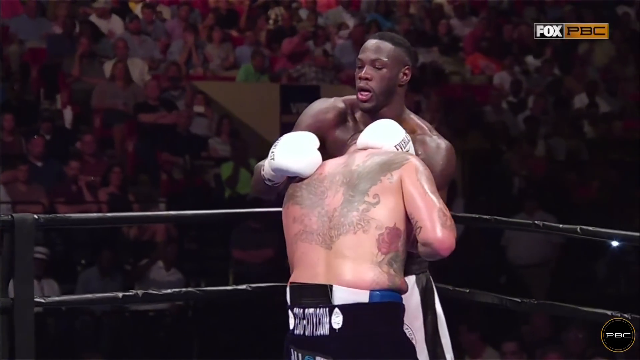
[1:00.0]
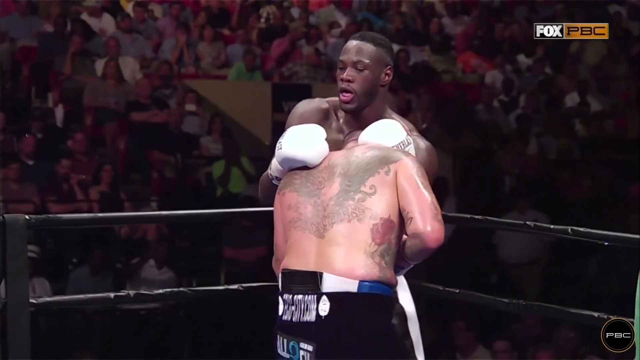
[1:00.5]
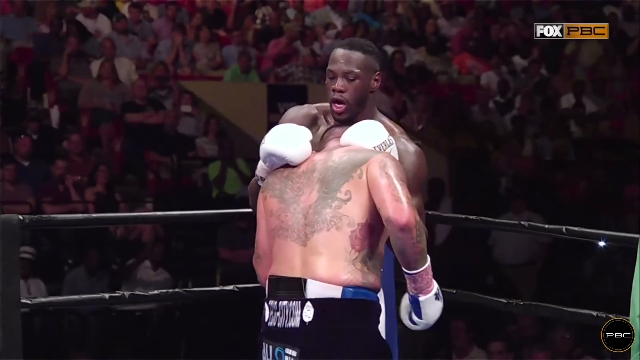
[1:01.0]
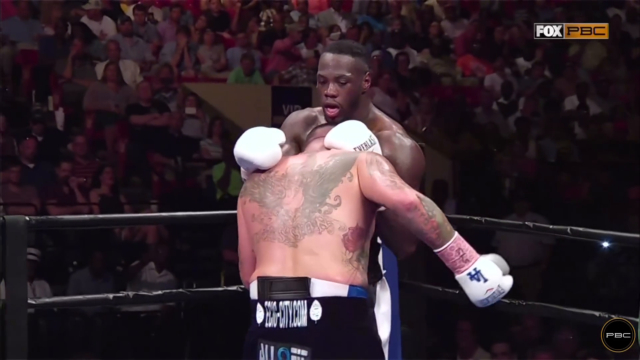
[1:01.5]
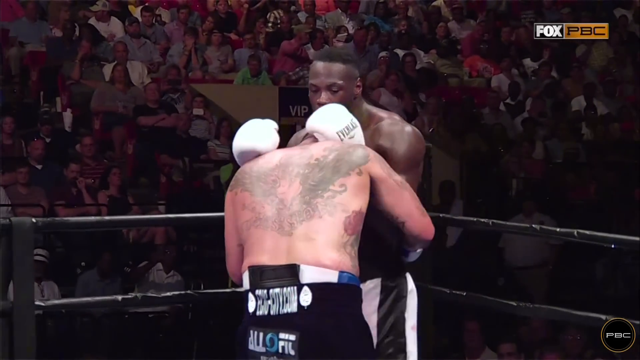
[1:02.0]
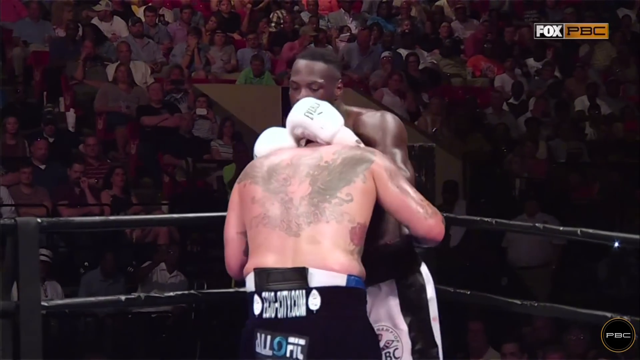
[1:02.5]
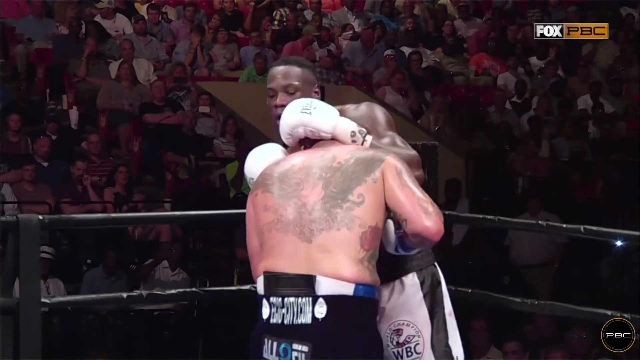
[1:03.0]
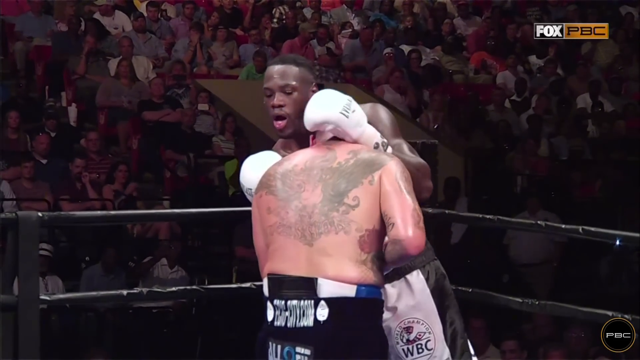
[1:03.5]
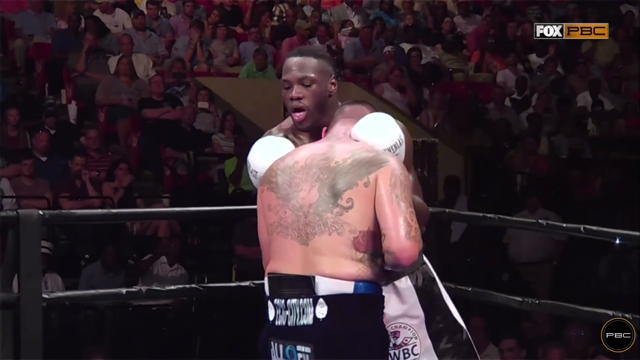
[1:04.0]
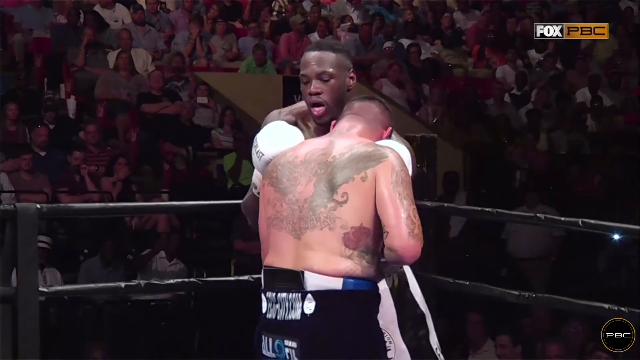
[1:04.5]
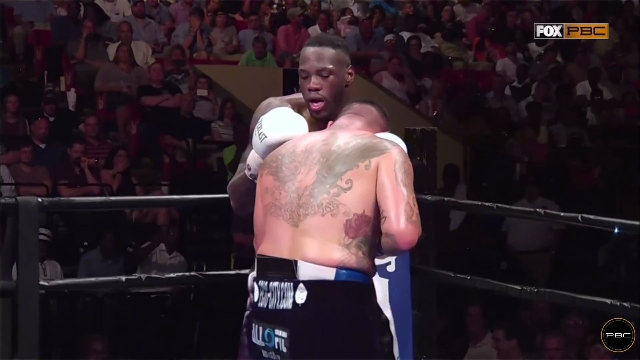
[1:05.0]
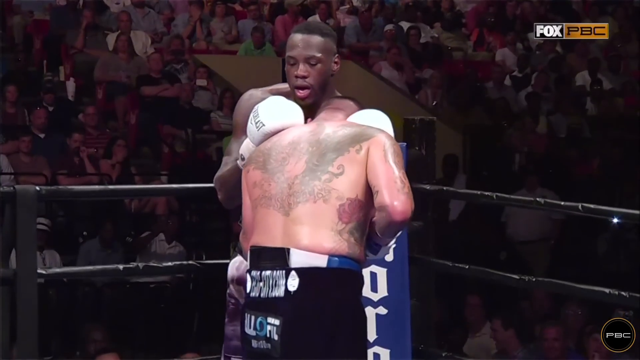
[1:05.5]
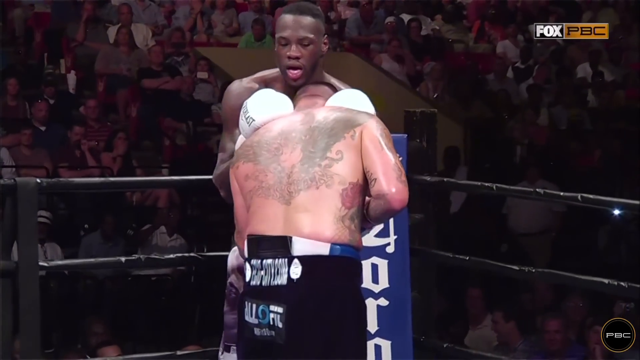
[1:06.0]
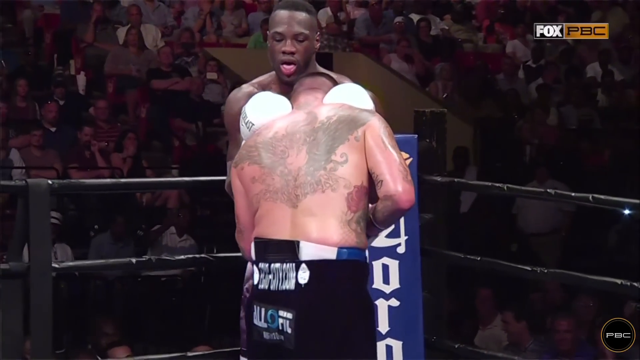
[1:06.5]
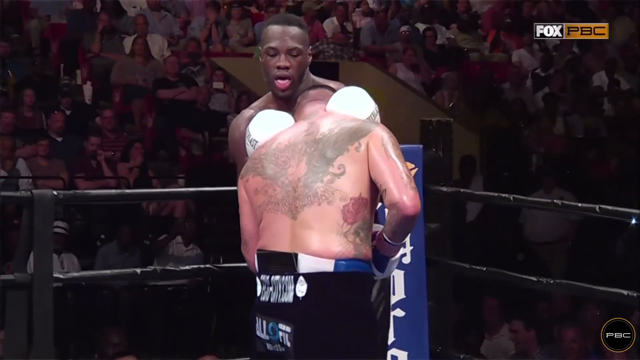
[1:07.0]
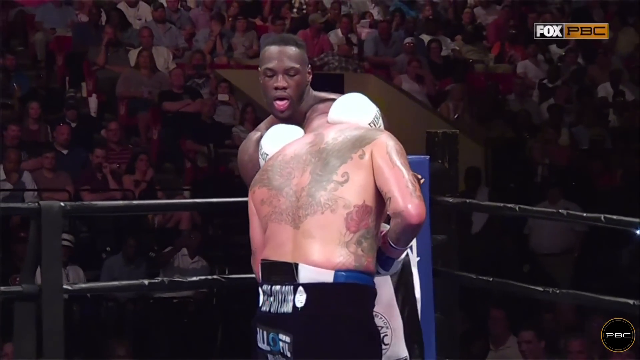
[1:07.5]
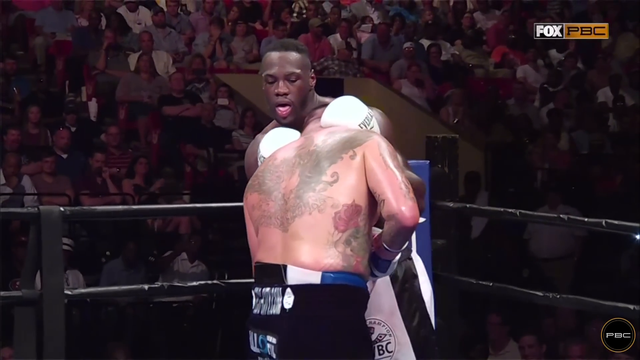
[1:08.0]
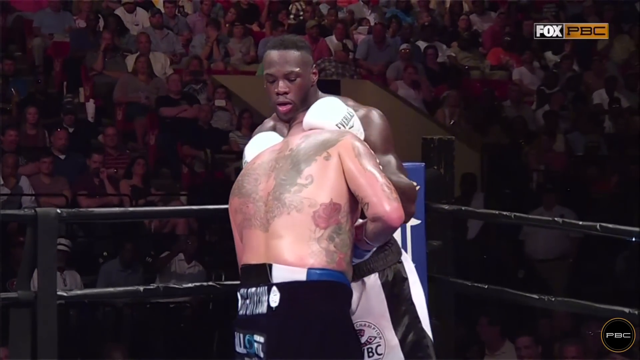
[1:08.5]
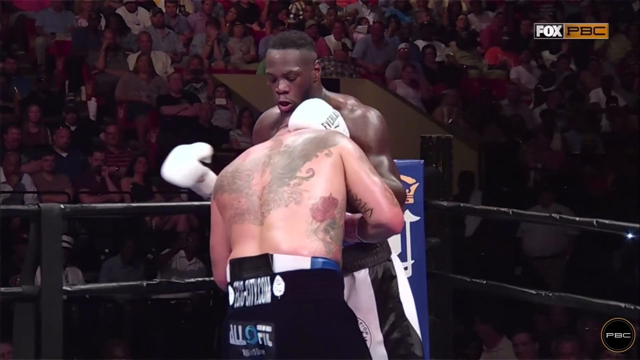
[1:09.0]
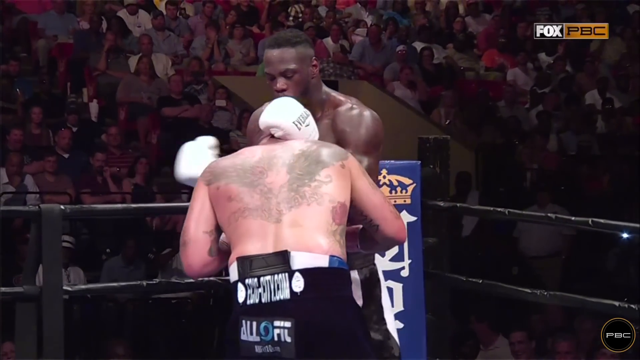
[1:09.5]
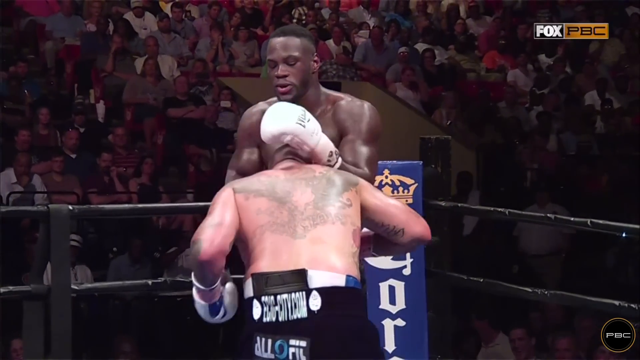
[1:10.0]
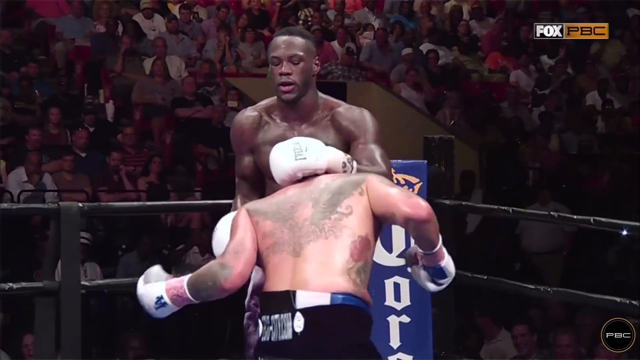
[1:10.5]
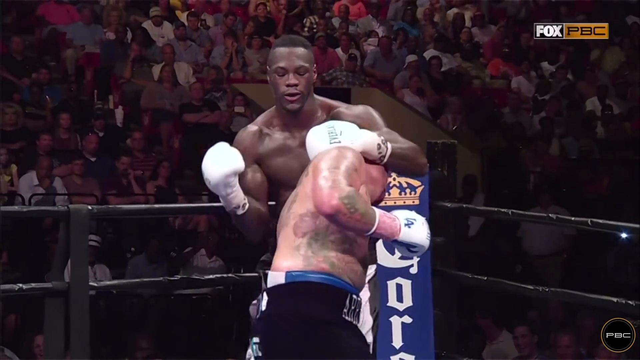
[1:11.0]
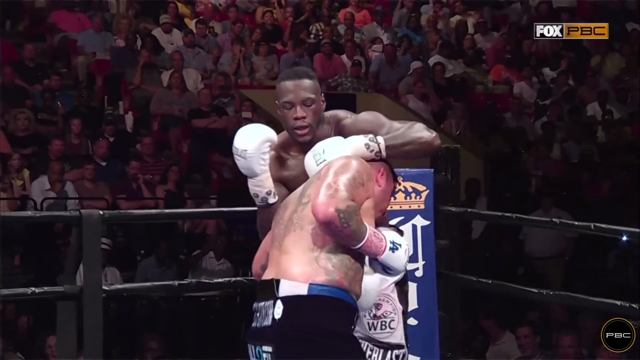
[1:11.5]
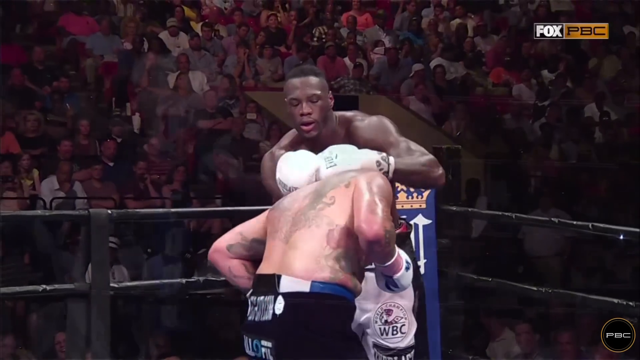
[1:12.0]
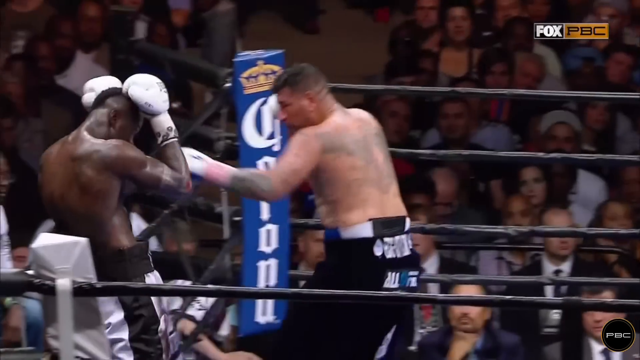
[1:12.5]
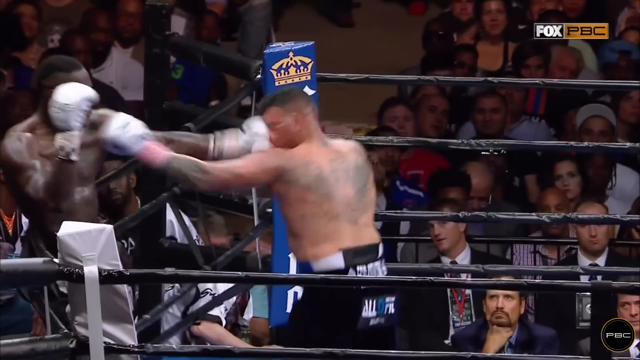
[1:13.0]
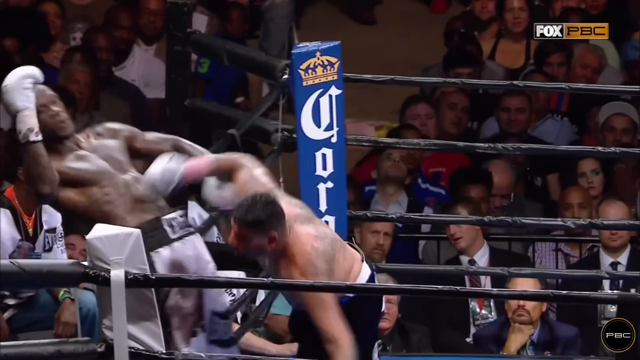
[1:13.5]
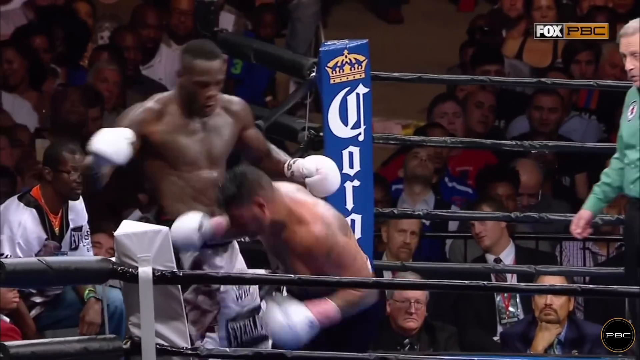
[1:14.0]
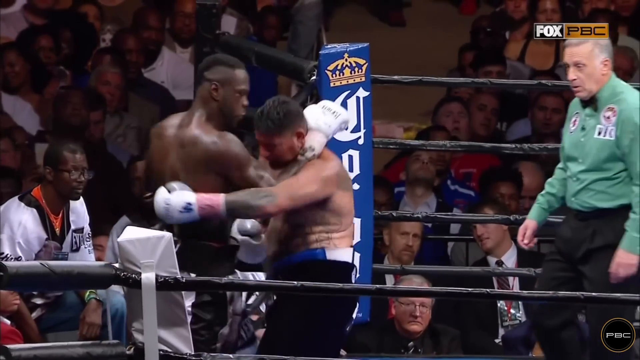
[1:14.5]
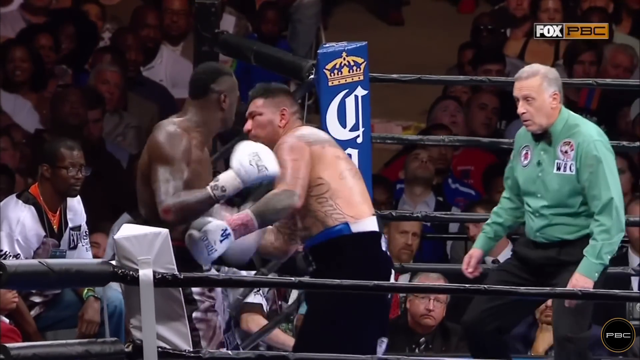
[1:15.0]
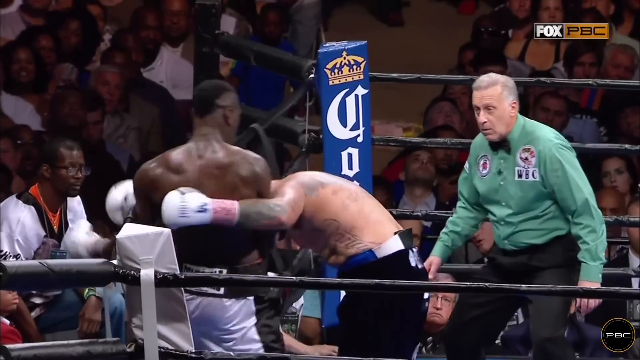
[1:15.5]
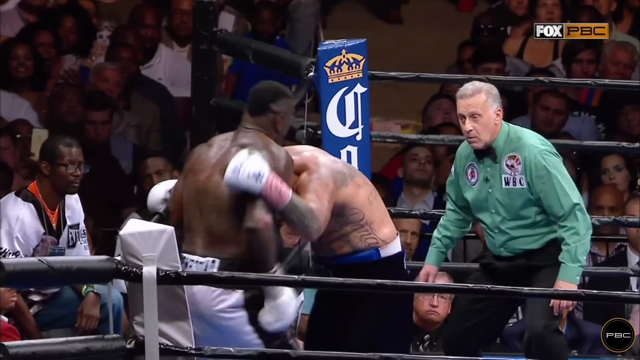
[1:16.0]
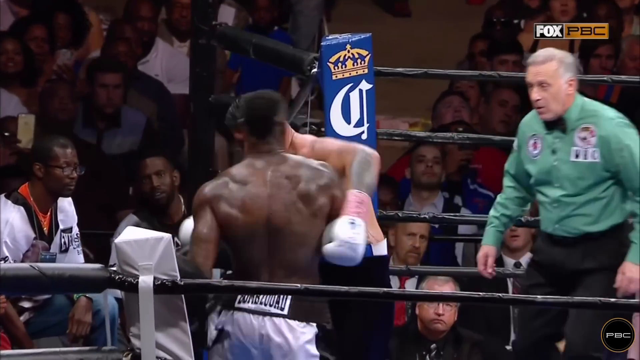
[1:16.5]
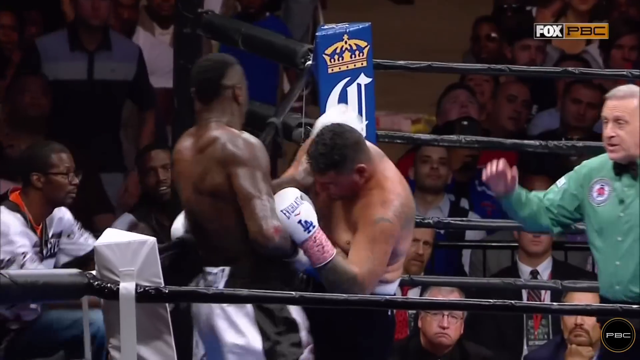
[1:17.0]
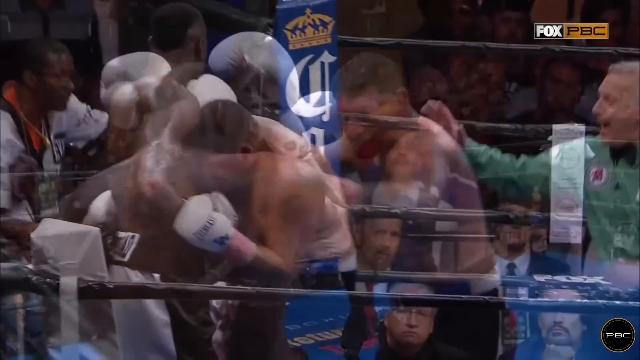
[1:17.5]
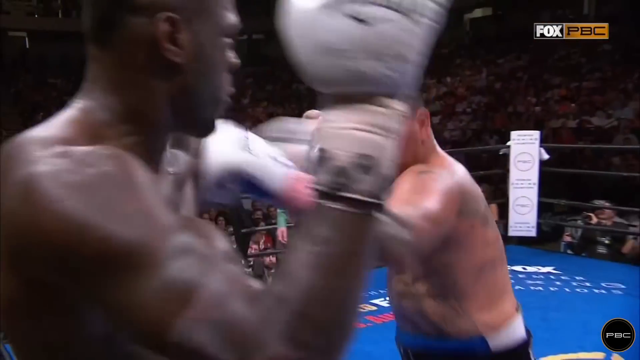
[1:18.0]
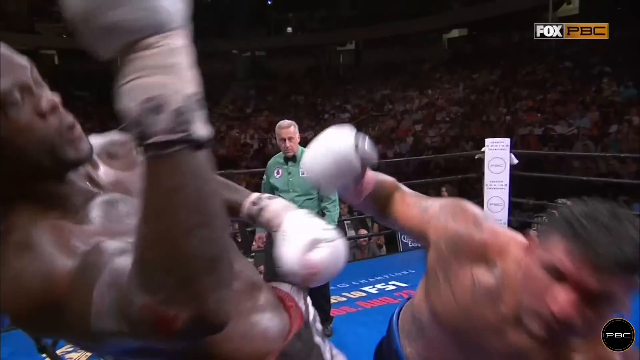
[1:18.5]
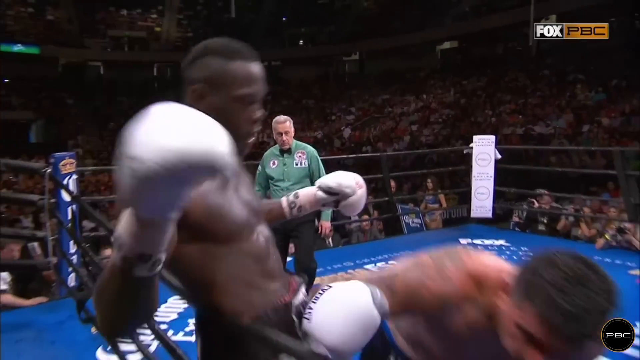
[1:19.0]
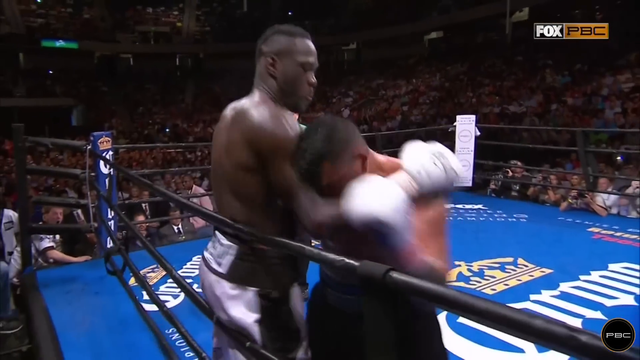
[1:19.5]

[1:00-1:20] A boxer of African descent has his opponent in a headlock, and the opponent tries to hit him with a right punch and a left punch. They are pushed up against the ropes, and the taller African boxer swings his hips left to right, trying to dodge the hits. The boxer in the headlock has intricate tattoos all over his back, with what looks like a rose on his right side under his arms, and tattoos on the lower sections of his arms. He seems to be losing, as the African boxer dodges many of the hits, cradles his opponent's head between his gloves, and smacks him on the face several times.